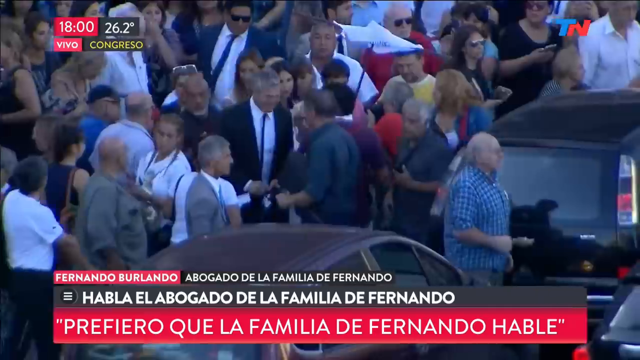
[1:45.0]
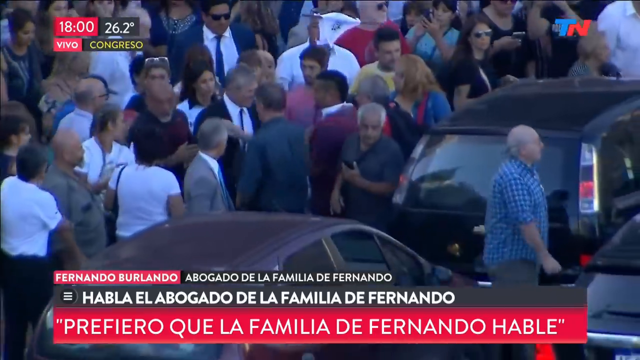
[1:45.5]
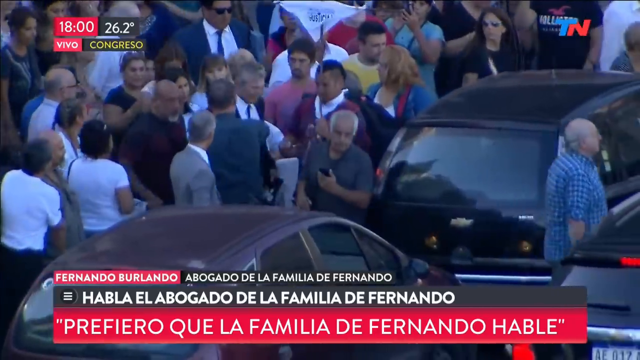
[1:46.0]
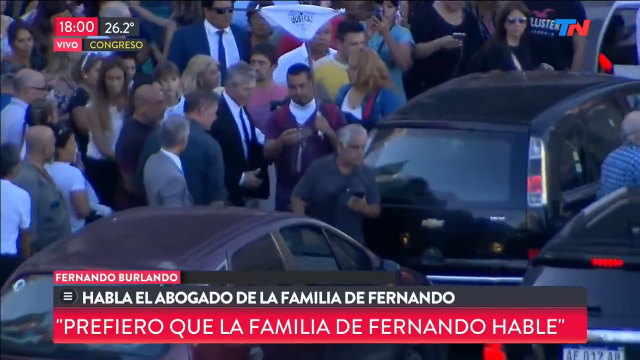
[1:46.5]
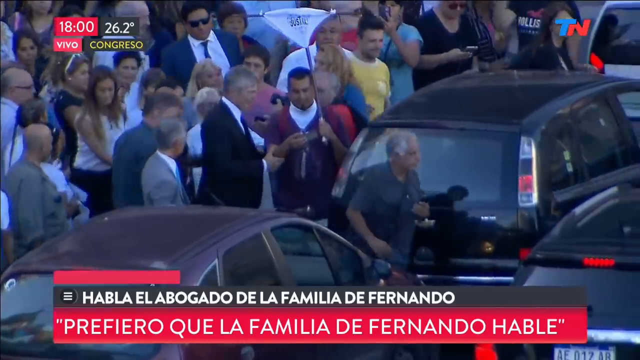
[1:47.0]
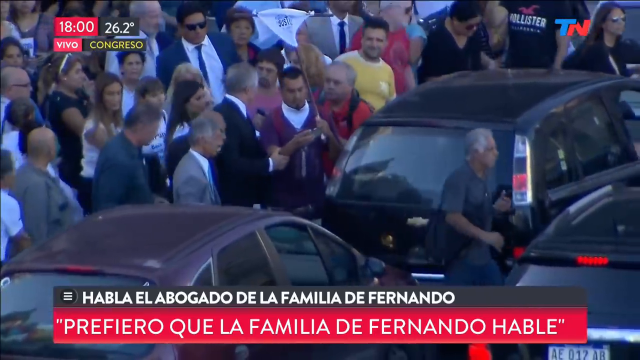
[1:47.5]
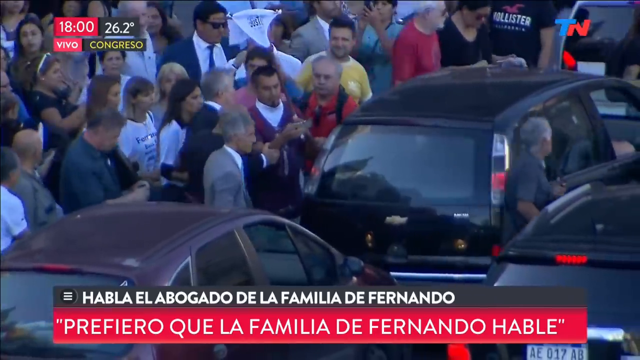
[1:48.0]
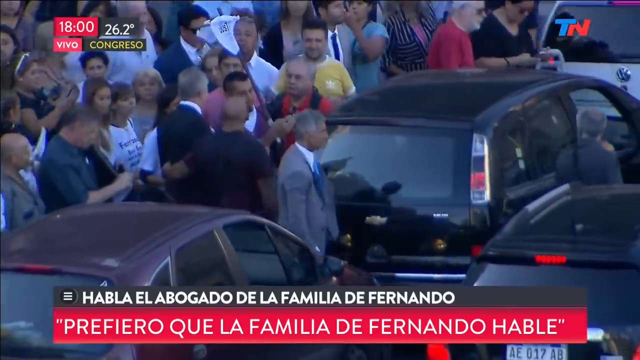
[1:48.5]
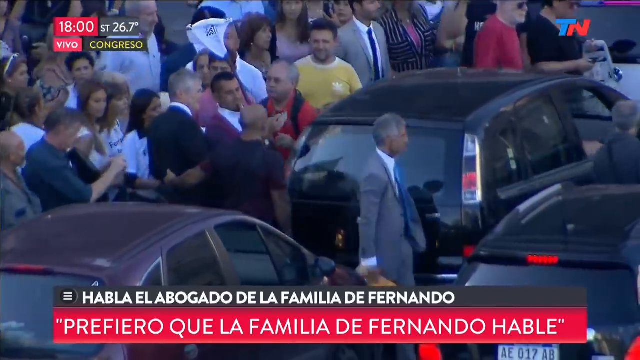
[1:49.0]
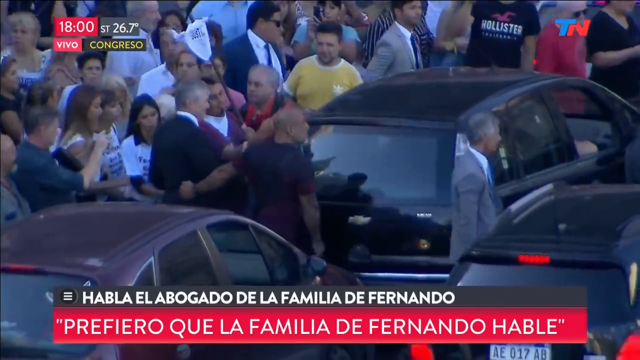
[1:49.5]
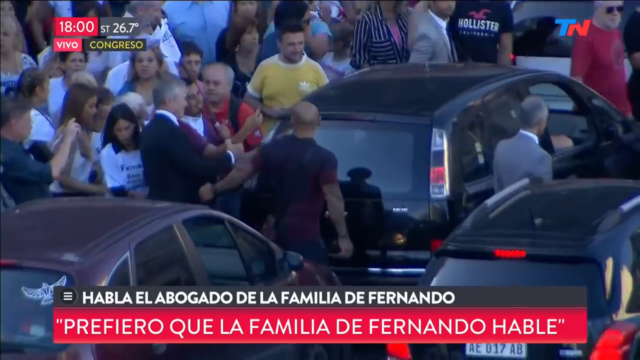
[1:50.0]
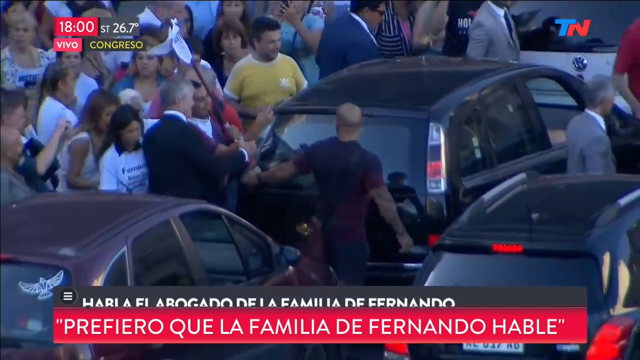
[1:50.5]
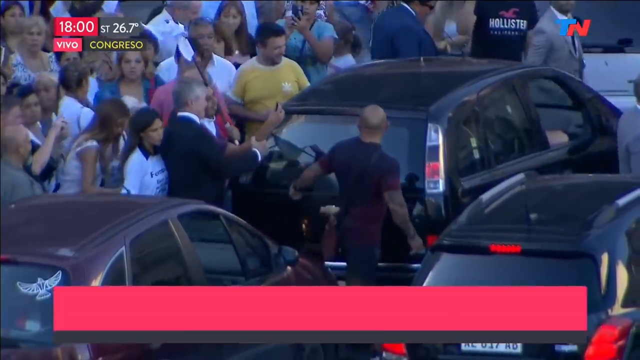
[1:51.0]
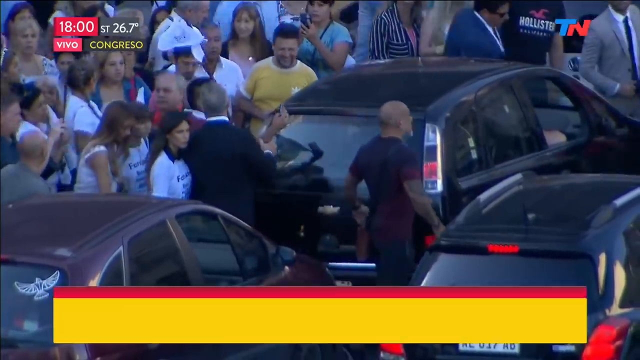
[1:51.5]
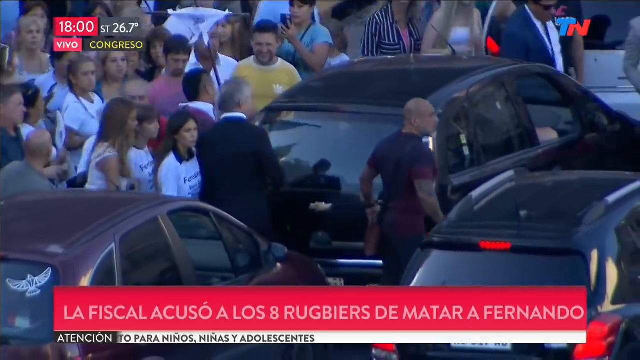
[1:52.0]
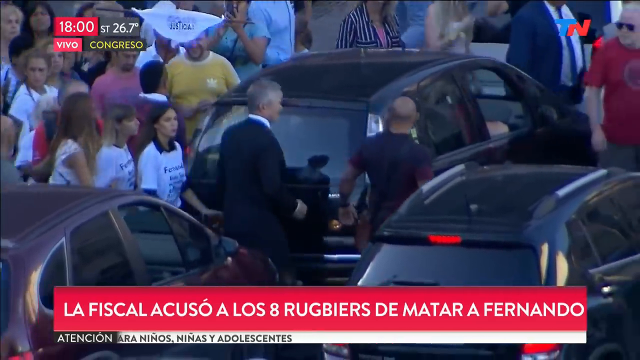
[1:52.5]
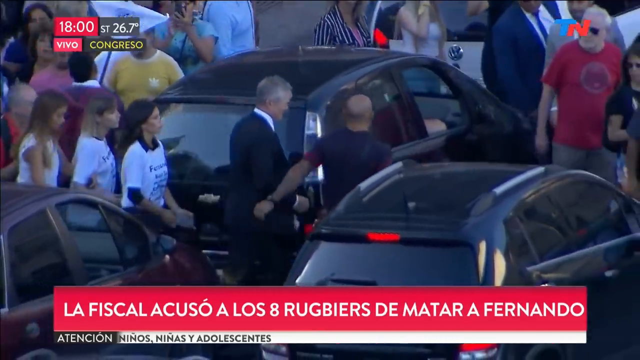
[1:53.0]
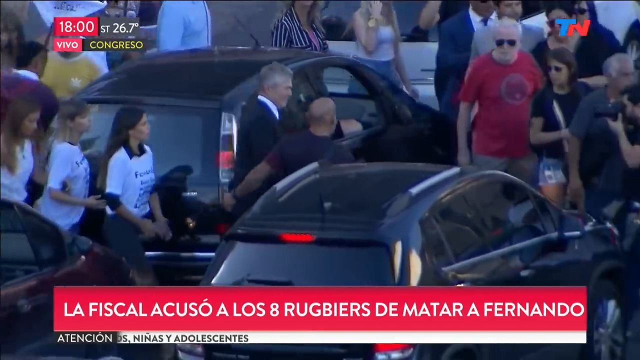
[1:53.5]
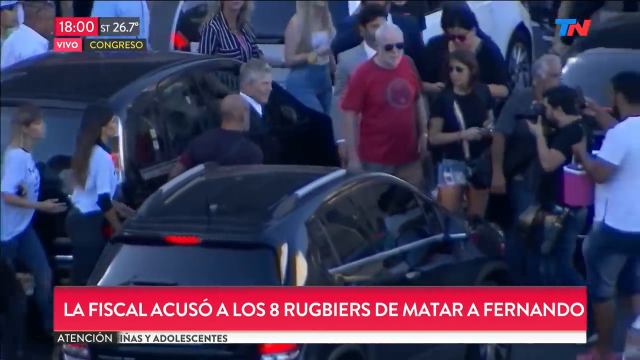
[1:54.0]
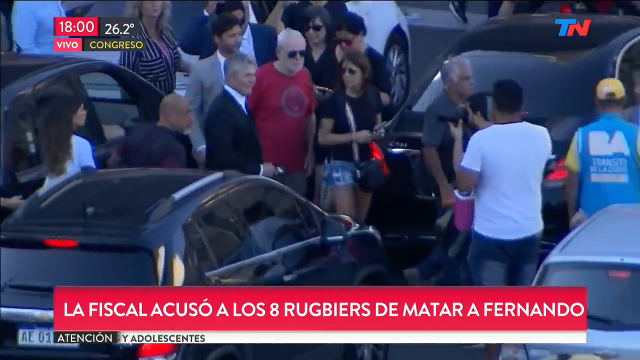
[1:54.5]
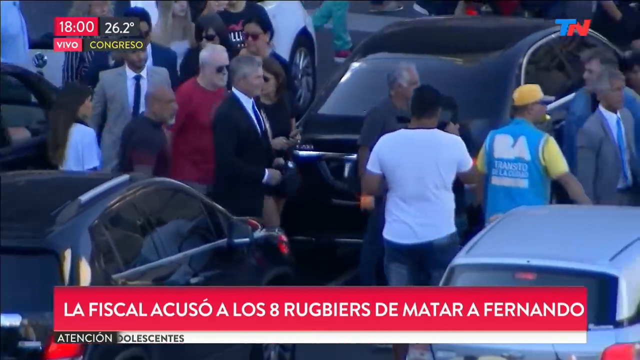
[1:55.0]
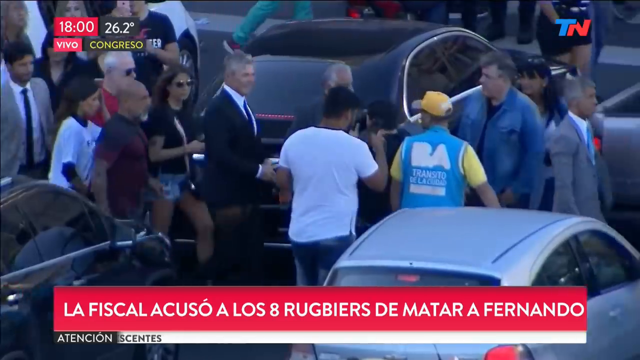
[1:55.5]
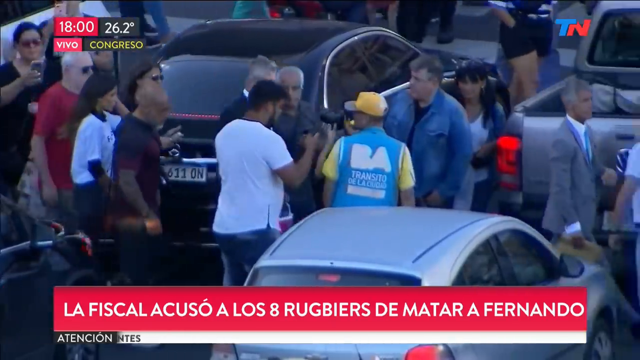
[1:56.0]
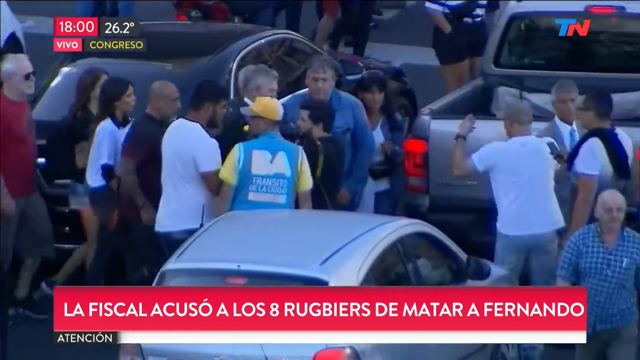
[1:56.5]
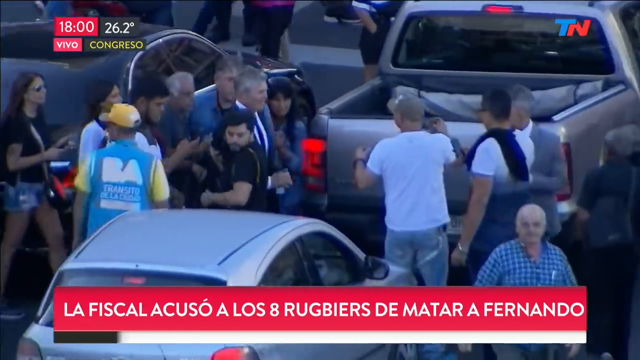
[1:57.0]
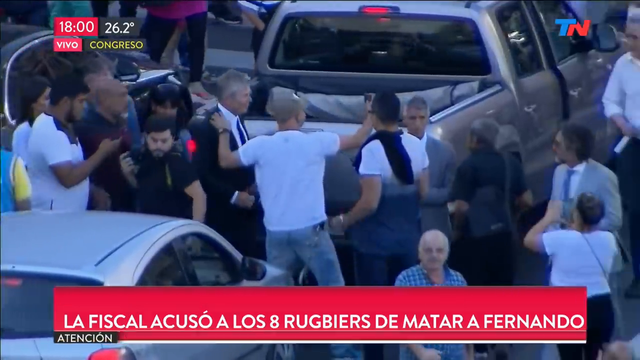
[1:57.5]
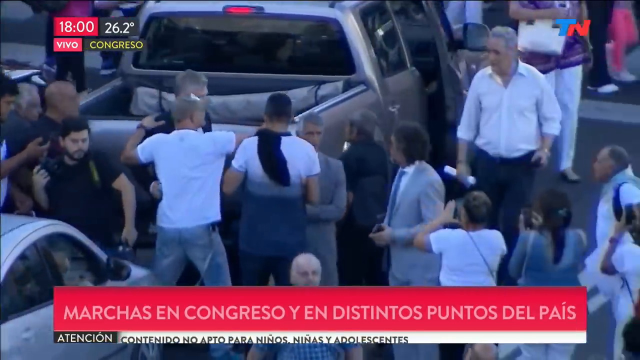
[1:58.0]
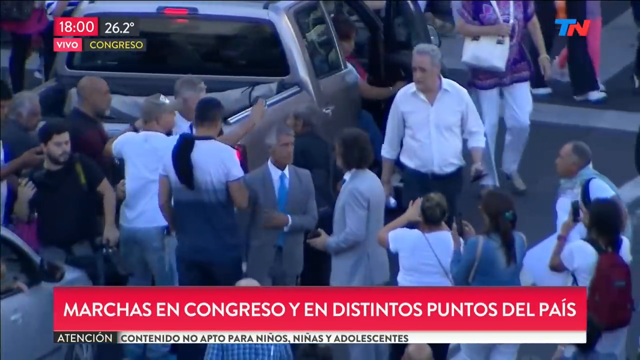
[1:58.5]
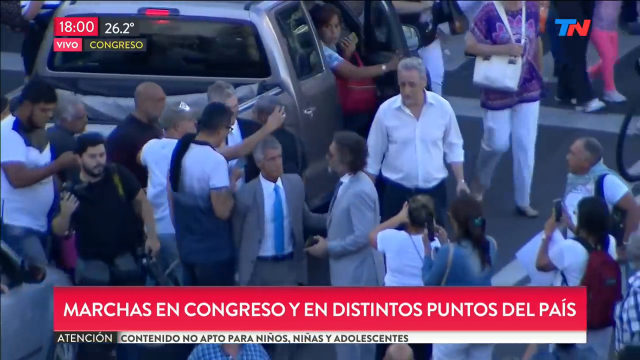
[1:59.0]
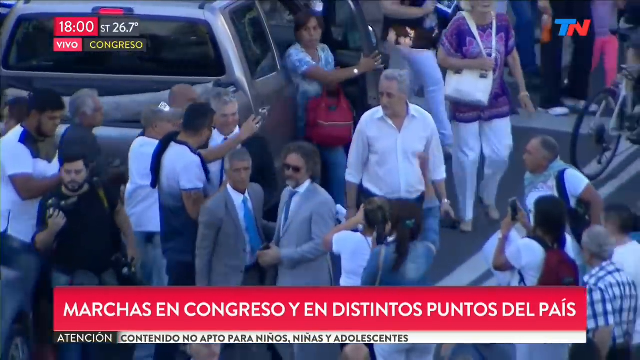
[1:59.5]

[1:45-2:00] A crowd of people stands packed tightly on a sidewalk on the left side of the frame, with black cars parked and lined up on the right. Some people make their way between the parked black vehicles into the street. A man in a black suit, white shirt, and black tie appears to be the center of attention, walking through first with many people following behind him. He stops to take a selfie with a man in the crowd in the street. On the other side of the street there are fewer parked vehicles and still a crowd standing there, with people holding up their phones to take selfies with him. White news text on a red background at the bottom reads "LA FSICAL ACUSO A LOS 8 RUGBIERS DE MATAR A FERNANDO".